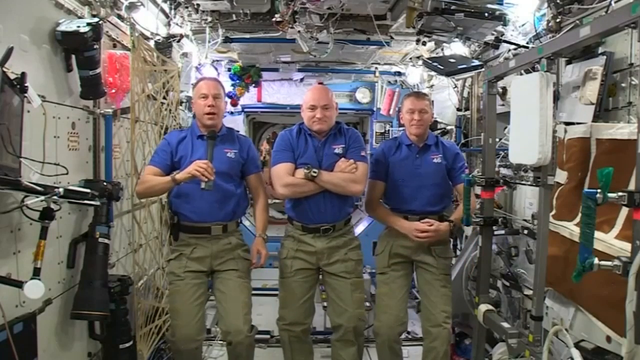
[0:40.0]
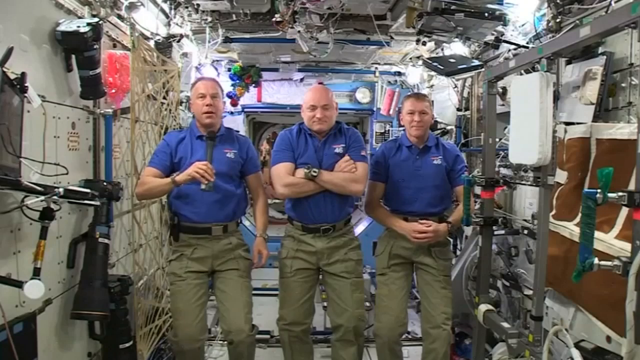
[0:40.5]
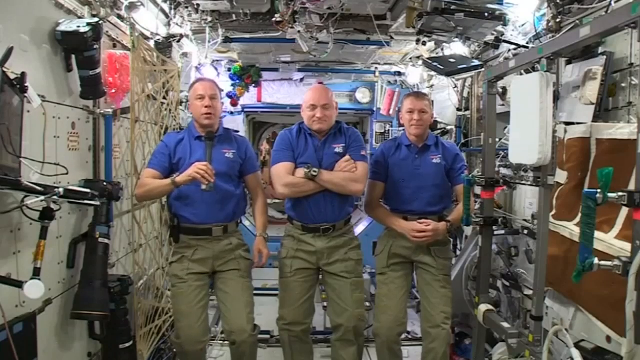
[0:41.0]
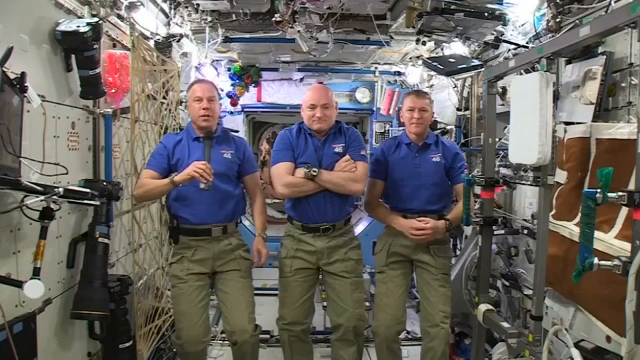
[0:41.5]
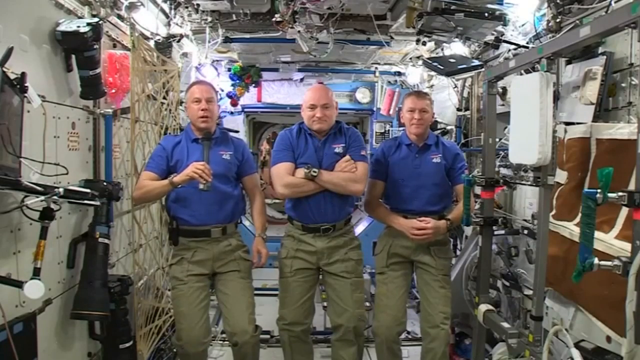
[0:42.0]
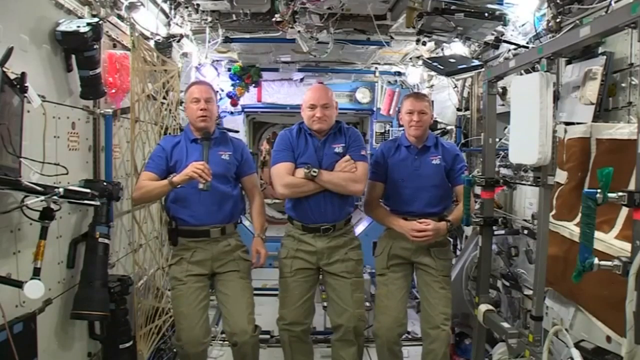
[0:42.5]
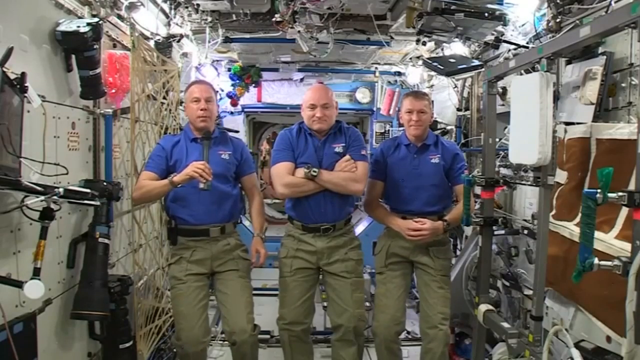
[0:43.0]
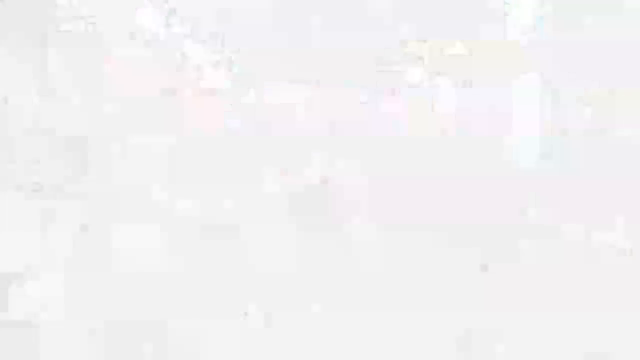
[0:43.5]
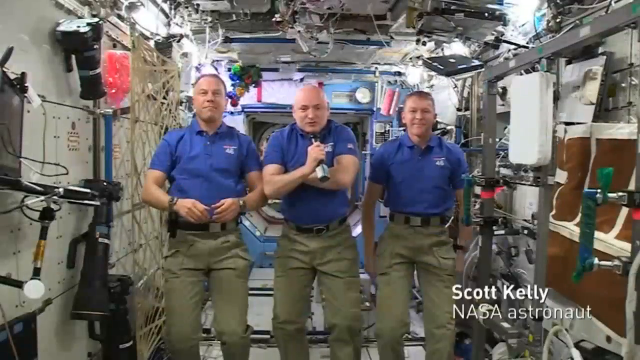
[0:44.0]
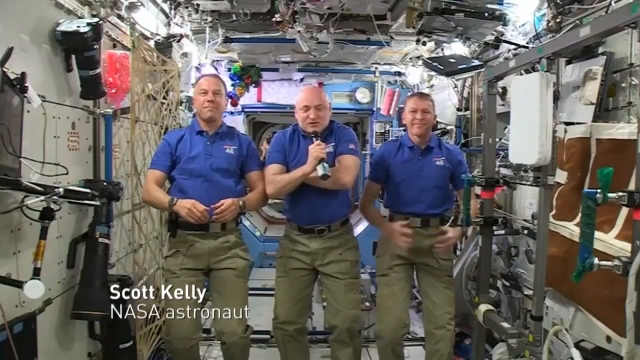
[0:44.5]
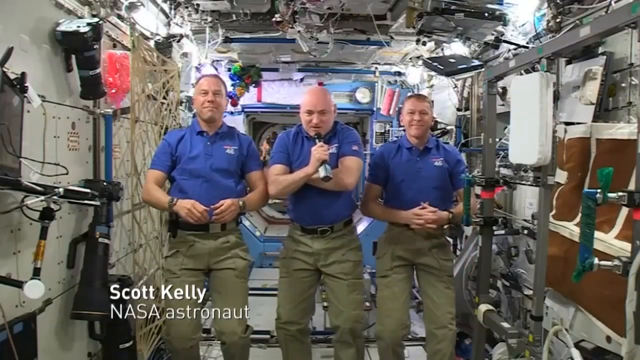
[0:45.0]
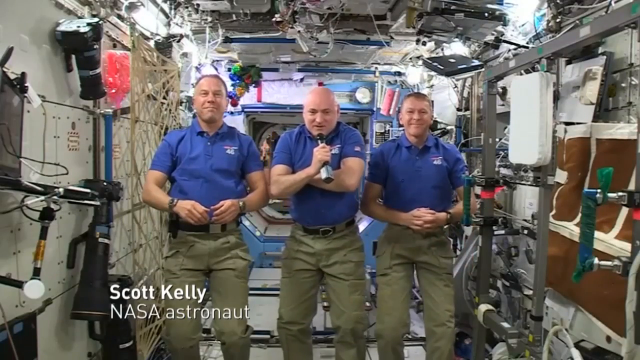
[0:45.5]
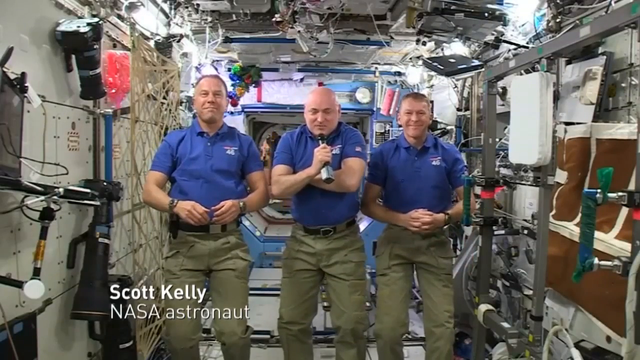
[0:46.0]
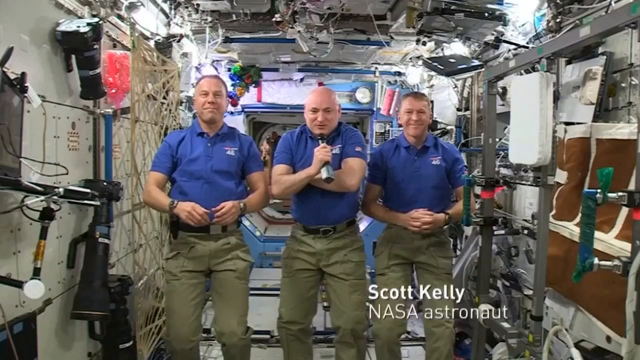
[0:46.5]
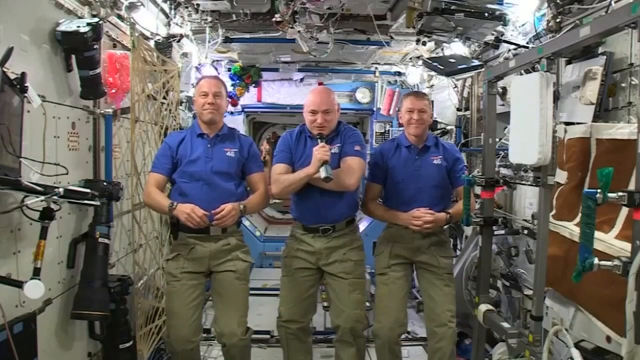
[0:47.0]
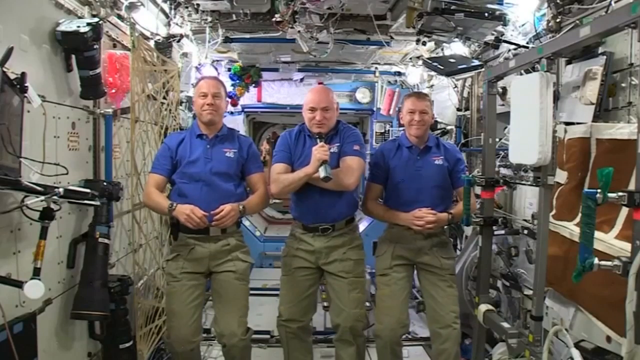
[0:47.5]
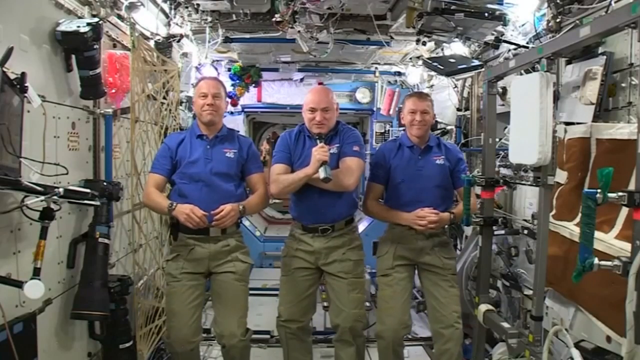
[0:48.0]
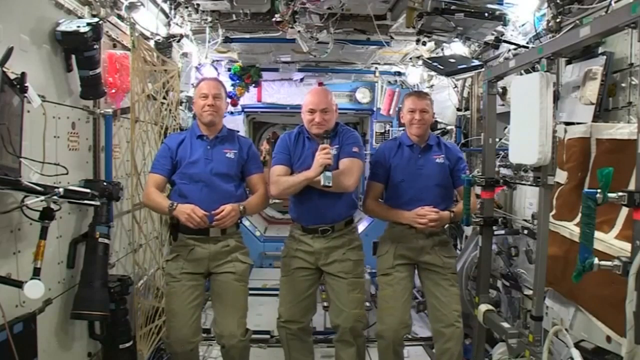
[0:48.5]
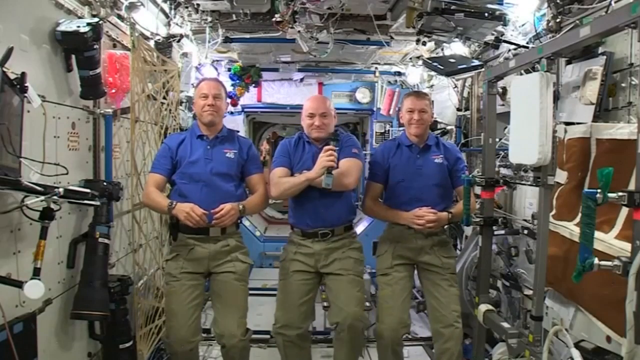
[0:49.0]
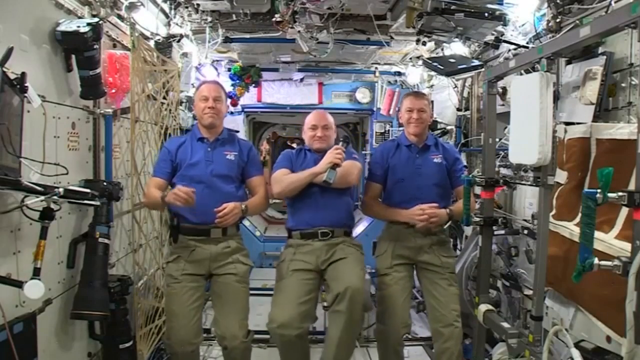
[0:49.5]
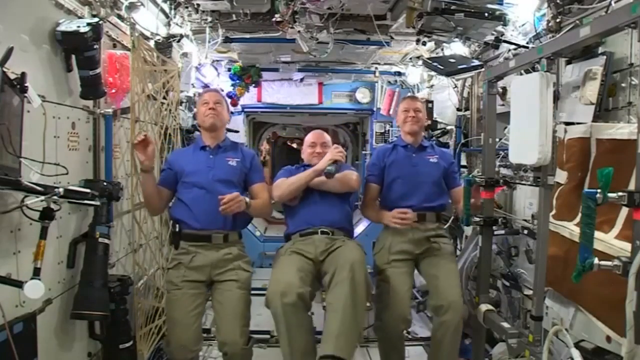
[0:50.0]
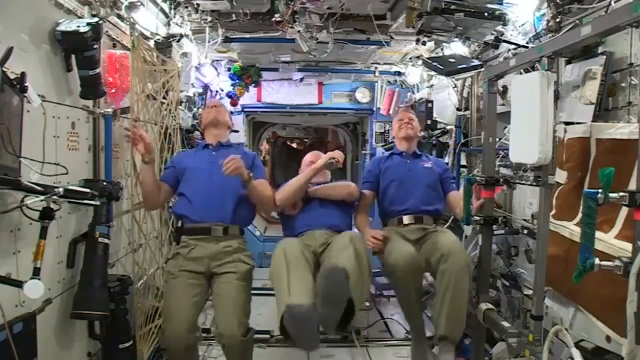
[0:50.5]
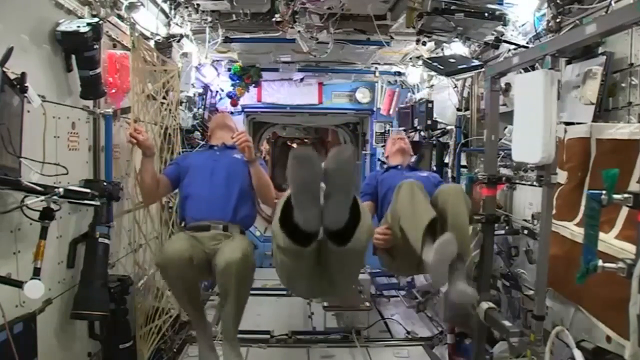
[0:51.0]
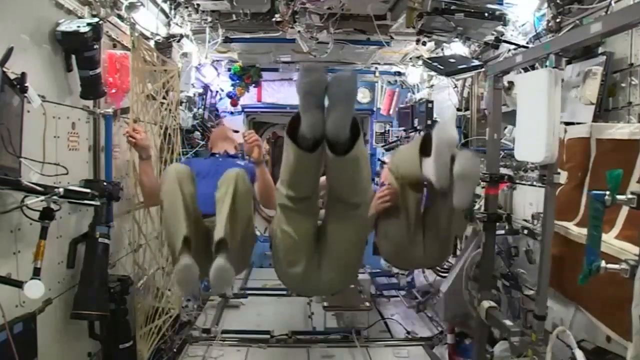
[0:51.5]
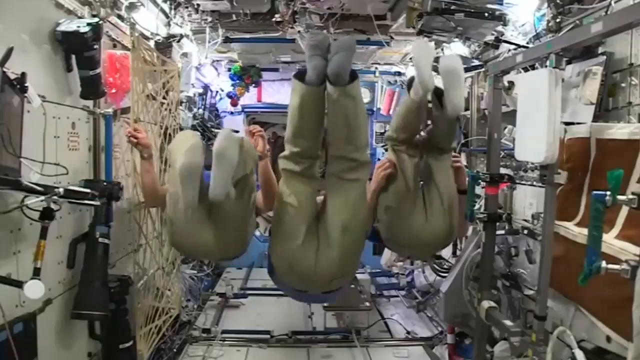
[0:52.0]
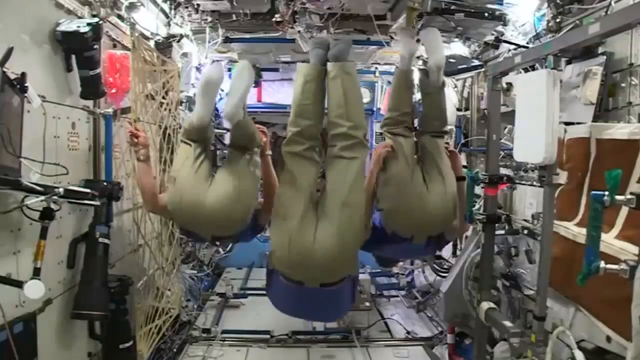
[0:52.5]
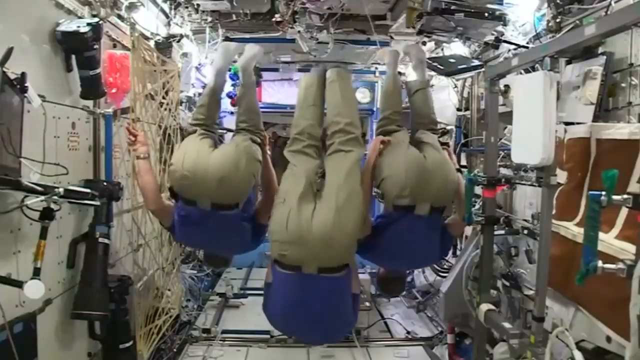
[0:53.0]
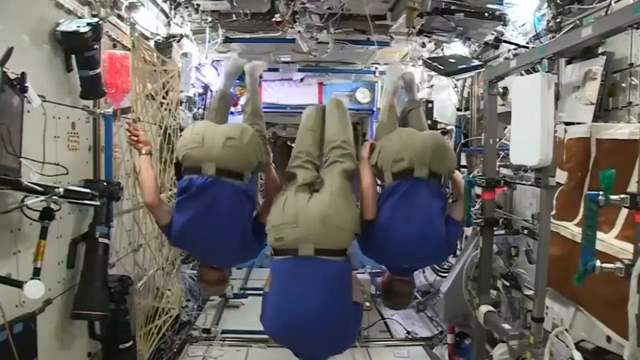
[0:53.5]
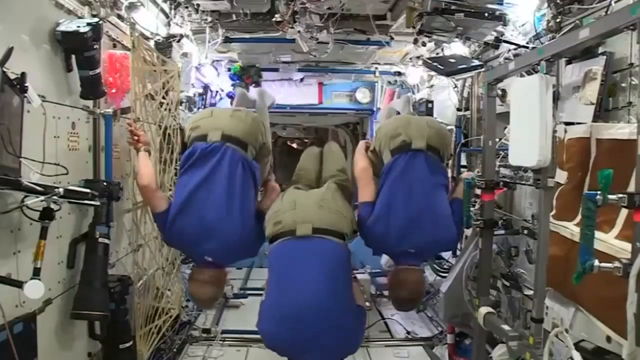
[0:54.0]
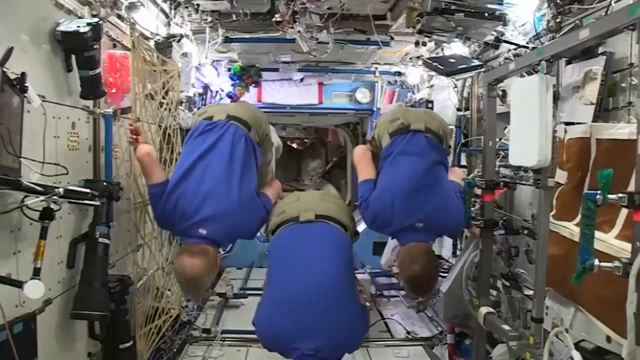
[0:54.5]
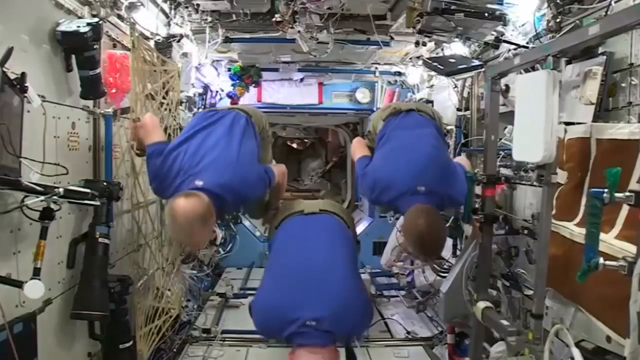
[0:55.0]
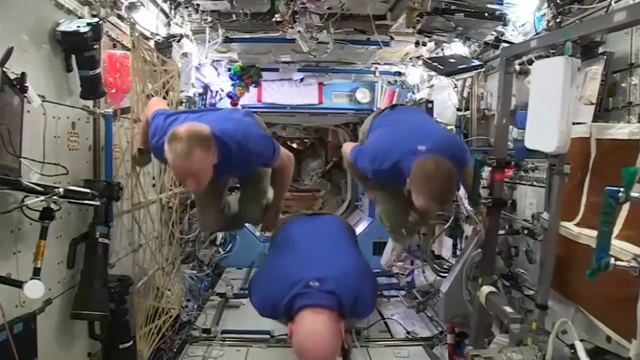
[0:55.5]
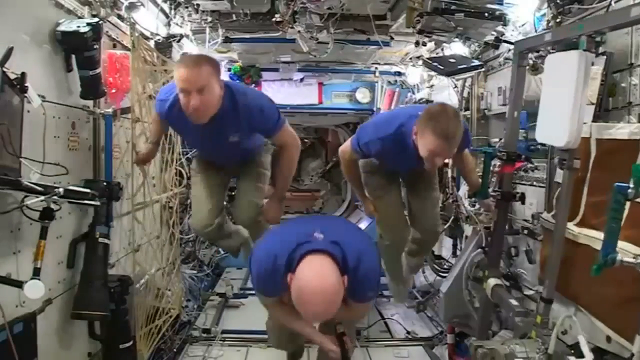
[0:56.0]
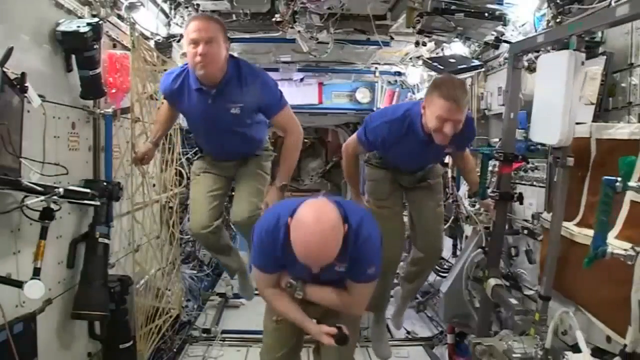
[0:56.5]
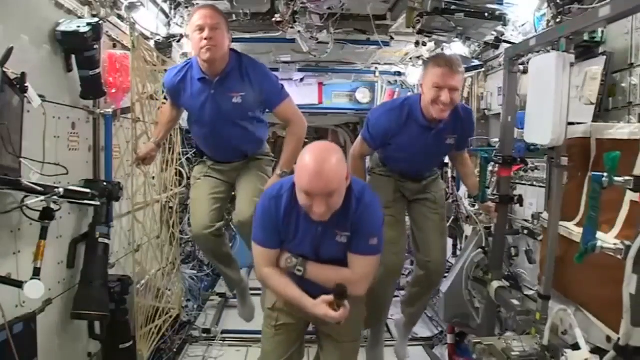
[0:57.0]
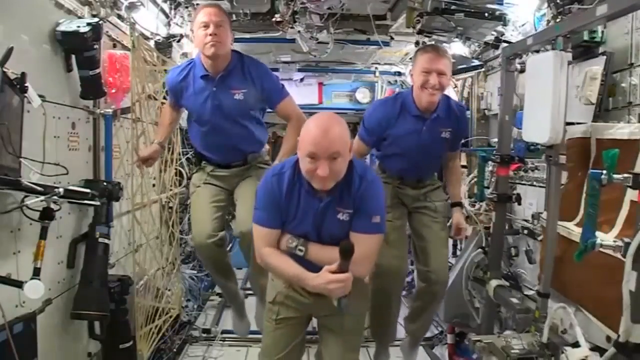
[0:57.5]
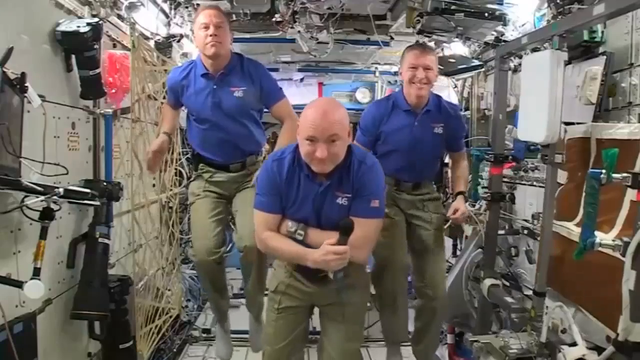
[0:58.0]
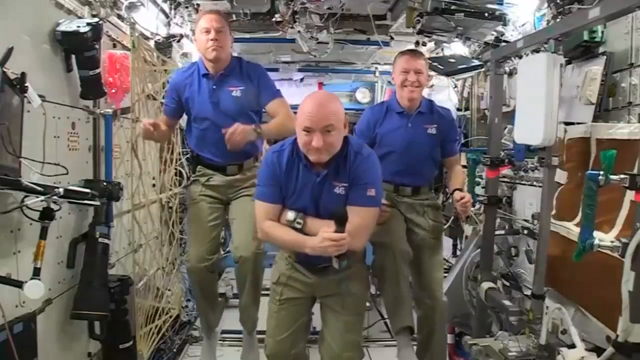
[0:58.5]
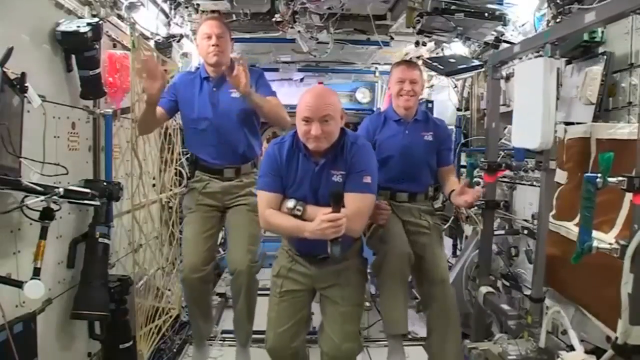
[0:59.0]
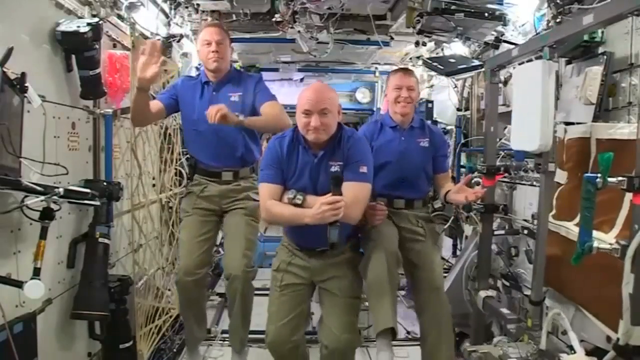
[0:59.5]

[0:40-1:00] The astronaut on the left is speaking into the microphone. Another transition follows in which the entire screen winks out and returns to the same view, except that now the middle astronaut holds the microphone, gripping it more toward the middle, whereas the previous man gripped it more toward the bottom. A white caption slides onto the lower left of the screen beneath him, labeling him "Scott Kelly, NASA astronaut". He speaks into the microphone for a few moments while the others smile. Then all three do another synchronized backflip, a little sloppier this time. The man on the right, apparently Tim Peake, collides with a large gray frame with white boxes inside it on the right side of the frame; he knocks it askew and it returns to its original position, so it must be tethered. As they flip, the floor beneath them is more visible: gray with paneling. Behind them is a blue ring shape with a rectangular indentation that seems to lead to the exit of the module or capsule, though it is very difficult to see behind Scott Kelly. They finish more askew than they started, not as aligned after the second backflip.